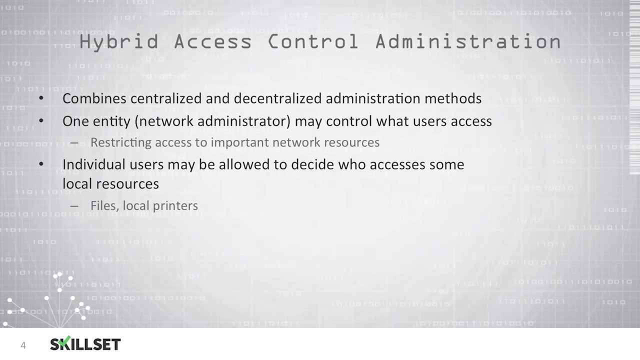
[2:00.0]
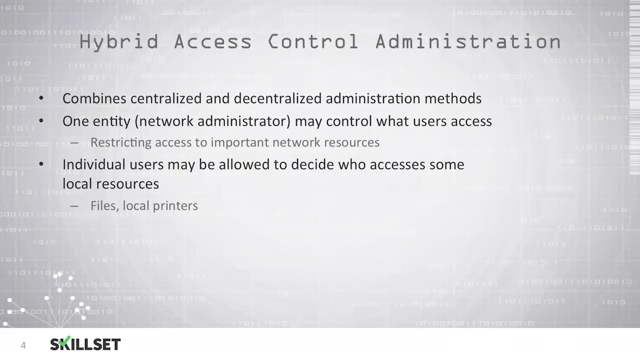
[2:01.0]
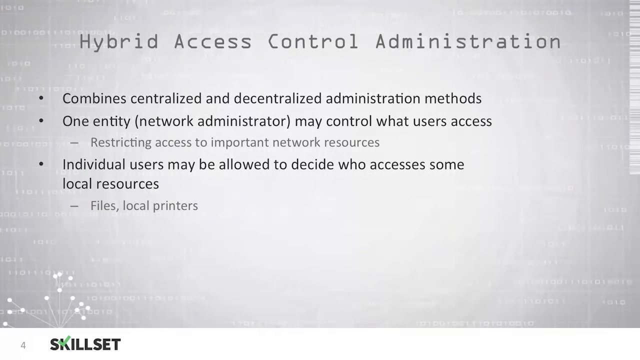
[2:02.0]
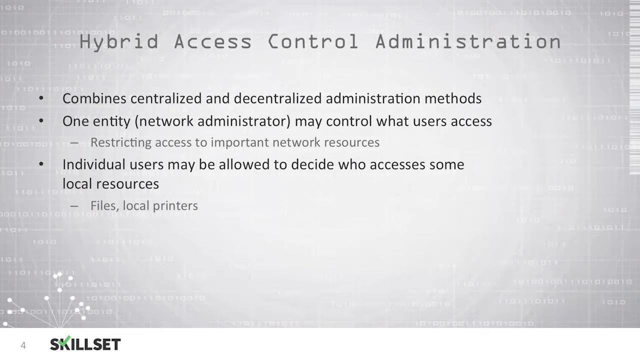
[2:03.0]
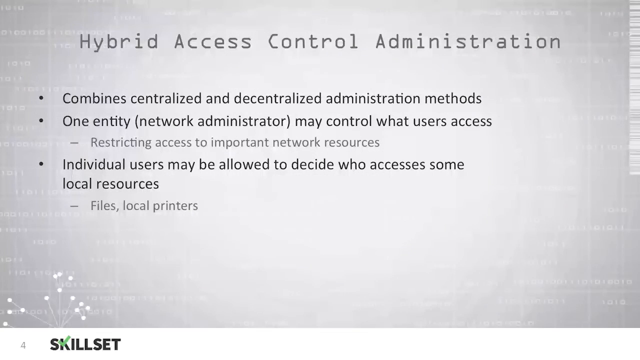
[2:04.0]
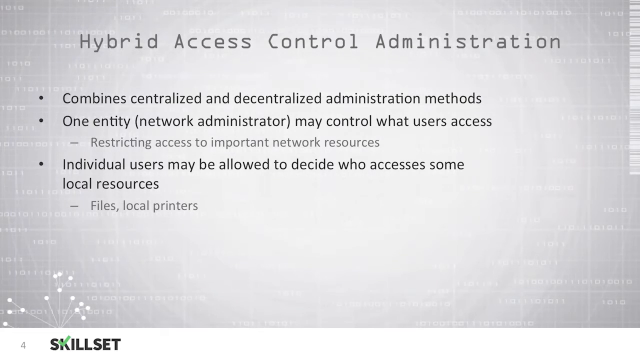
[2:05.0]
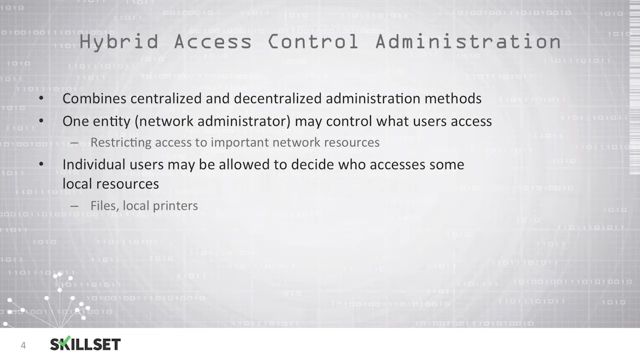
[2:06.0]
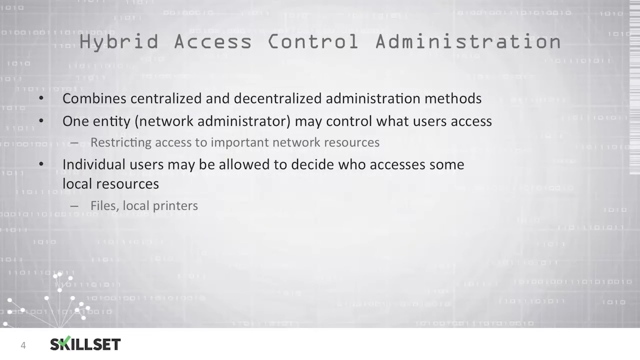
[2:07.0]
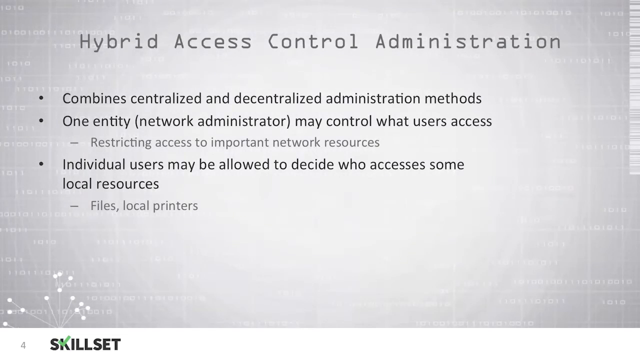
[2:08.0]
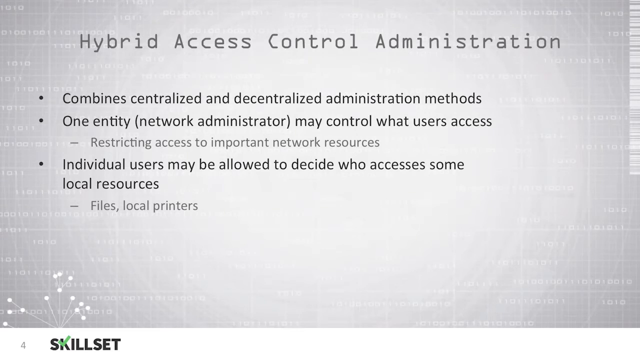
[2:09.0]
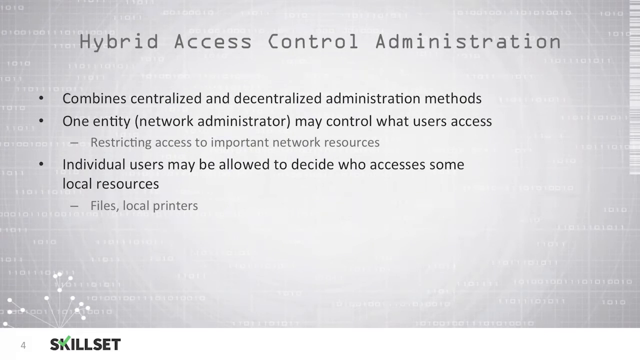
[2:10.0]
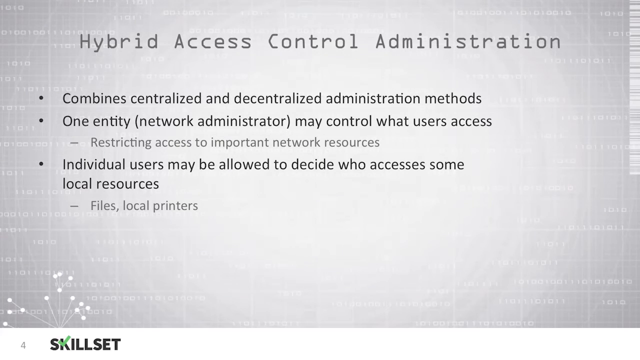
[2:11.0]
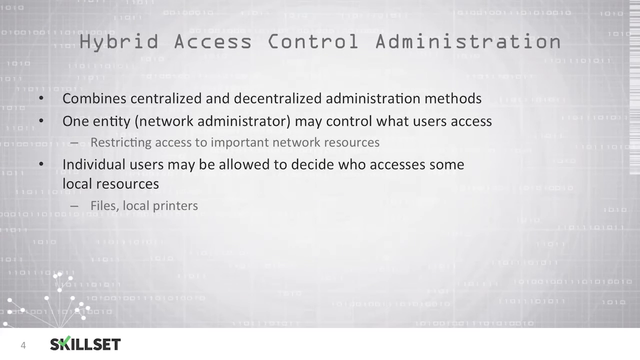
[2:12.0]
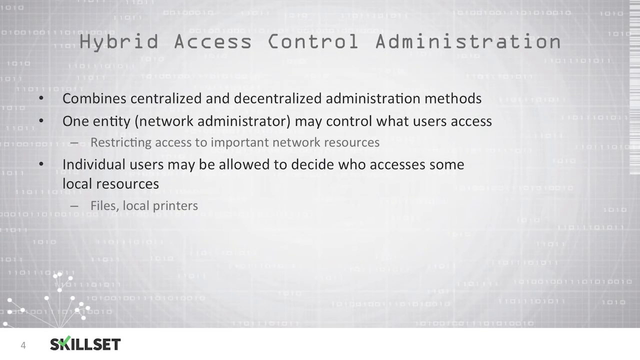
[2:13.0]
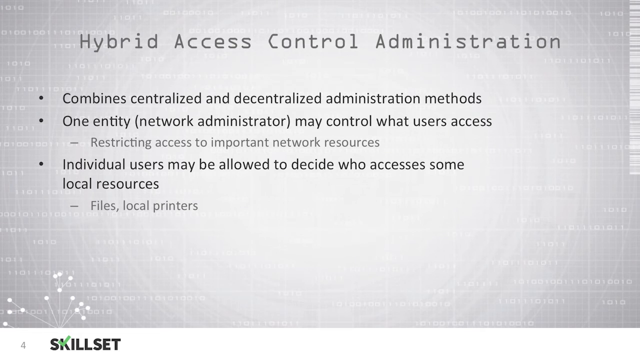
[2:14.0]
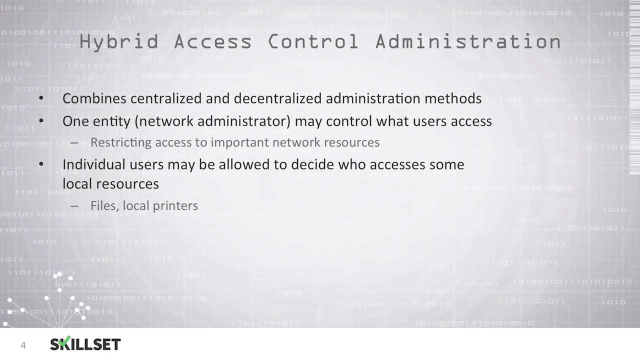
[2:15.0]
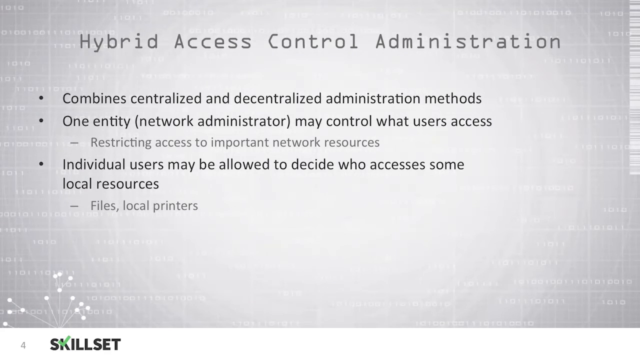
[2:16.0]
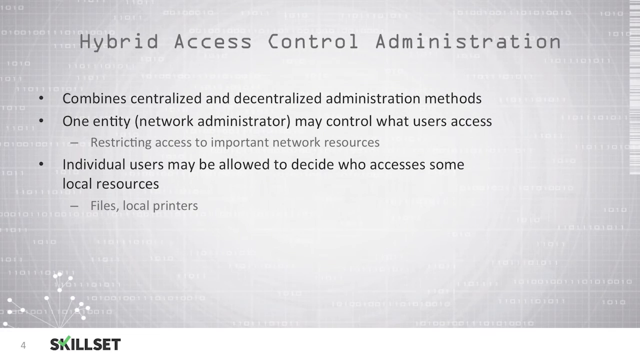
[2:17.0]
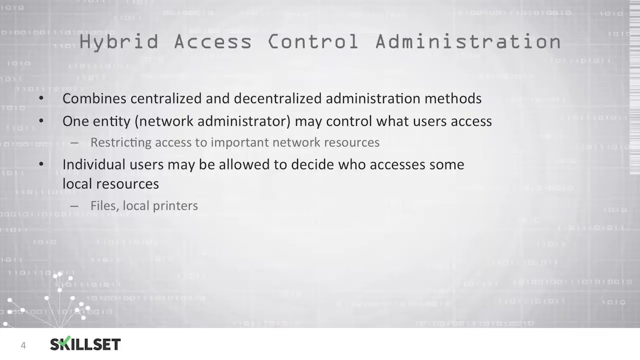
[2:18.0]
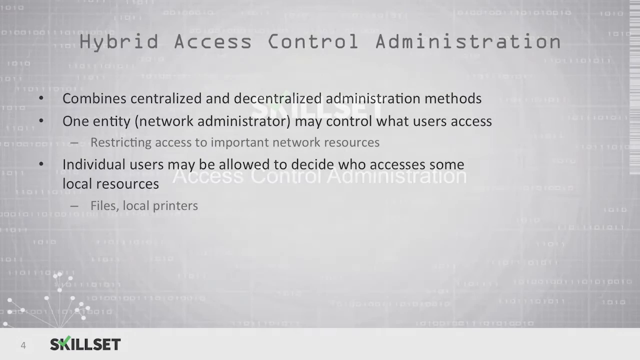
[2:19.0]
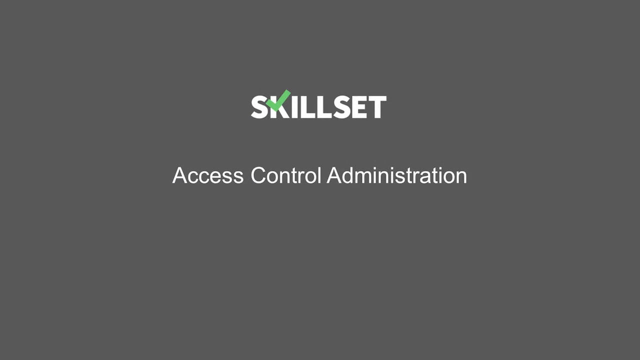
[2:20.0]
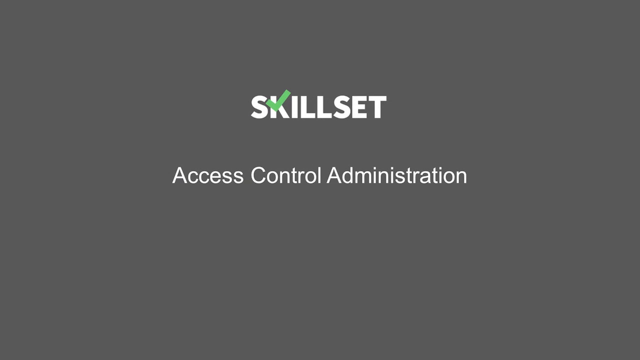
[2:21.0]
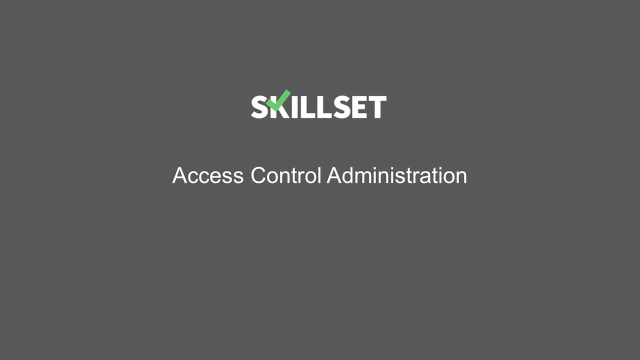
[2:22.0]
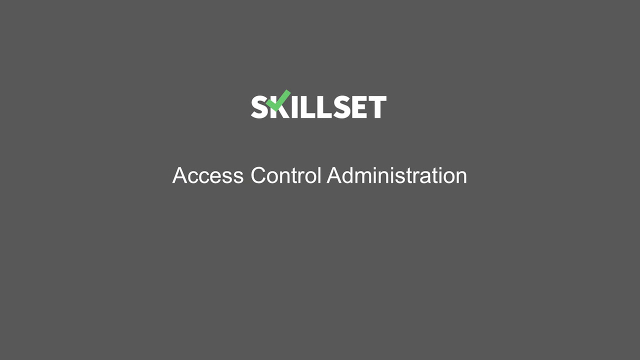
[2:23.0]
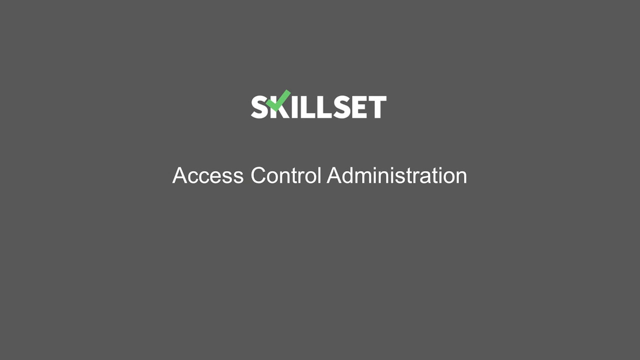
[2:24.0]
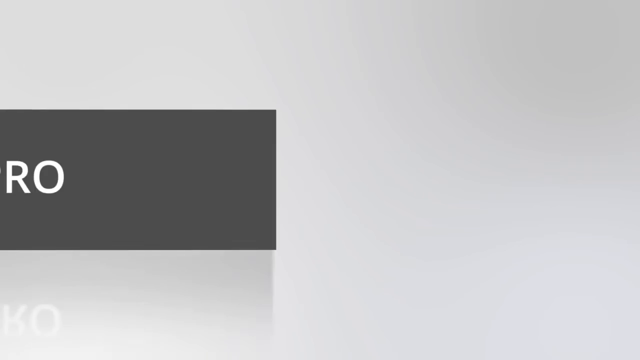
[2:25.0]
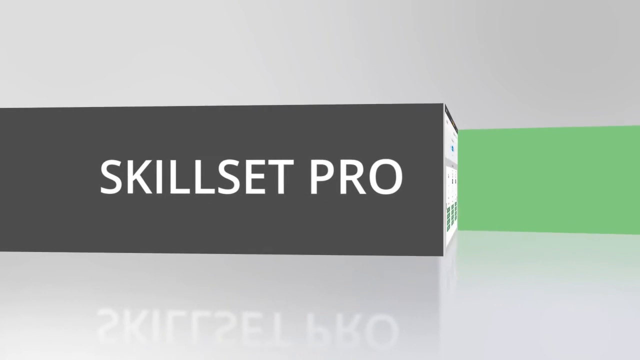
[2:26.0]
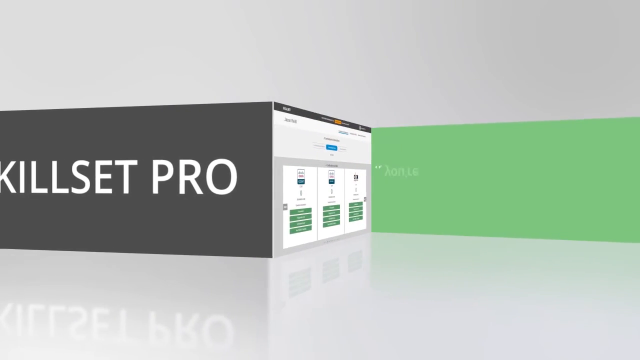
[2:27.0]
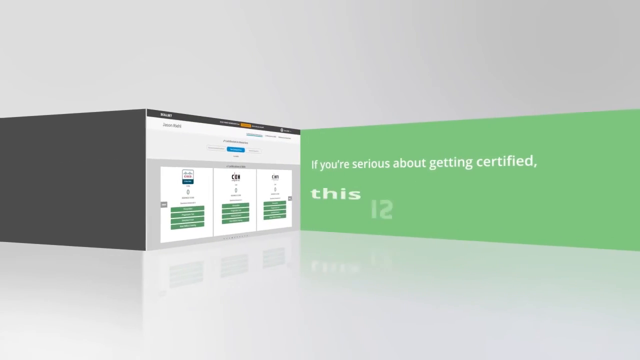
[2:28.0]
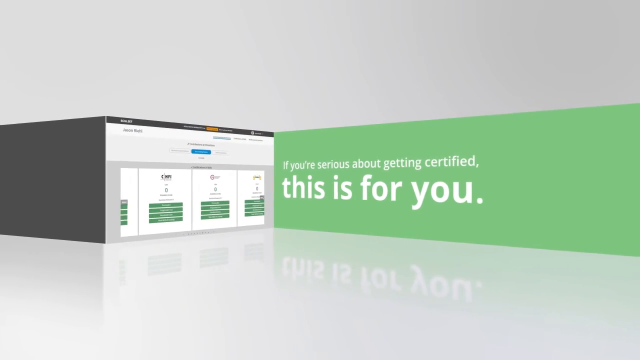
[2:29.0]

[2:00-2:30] After page four, the page gradually transitions to a title sequence showing "skill set" in a white bold font, with the green check slightly making up the letter K. Under it, in smaller white font, is "access control administration", which seems to be the next topic. The title sits against a gray background, so the white font brightens against the darker background. The sequence then transitions into another title in white, bold font, "Skill Set Pro". The main background is white, with a smaller dark gray rectangle behind the title and a smaller, squarish green rectangle on the right side of "Pro". Under the title is a slight animated reflection of "Skill Set Pro", as if there were a mirror at the bottom of the video. The dark background and the title then transition as if they were an object moving, and the view pans to the right, giving a sort of mirrored title. The green rectangle becomes larger and shows small white text reading "if you're serious about getting certified," and, in a bigger white font, "this is for you." On the left side is a small illustration of what looks to be the website, which sifts through different examples of the site.